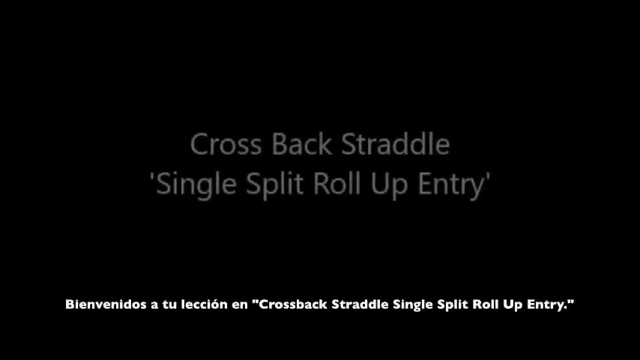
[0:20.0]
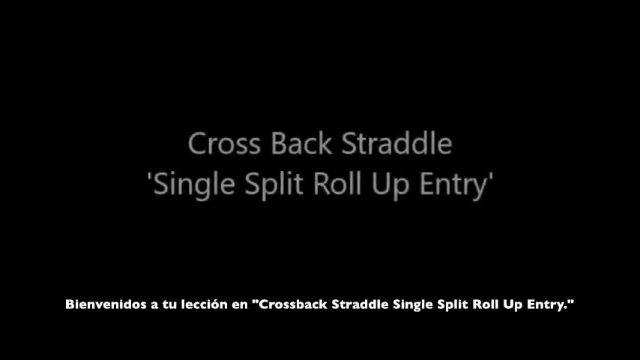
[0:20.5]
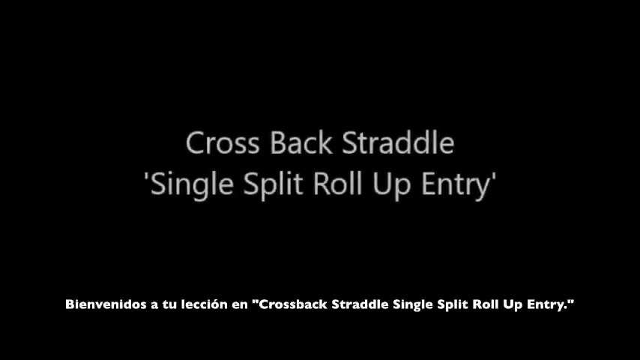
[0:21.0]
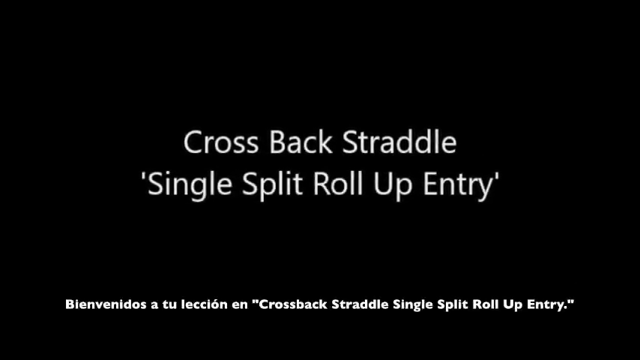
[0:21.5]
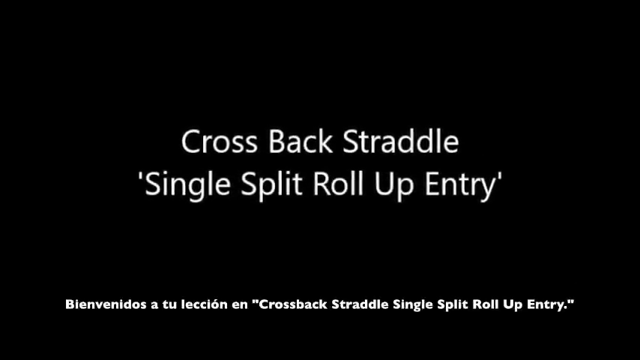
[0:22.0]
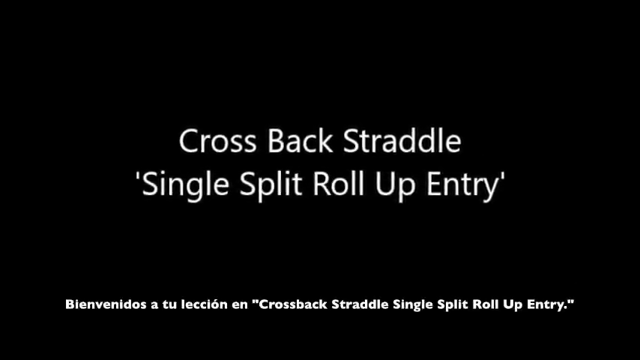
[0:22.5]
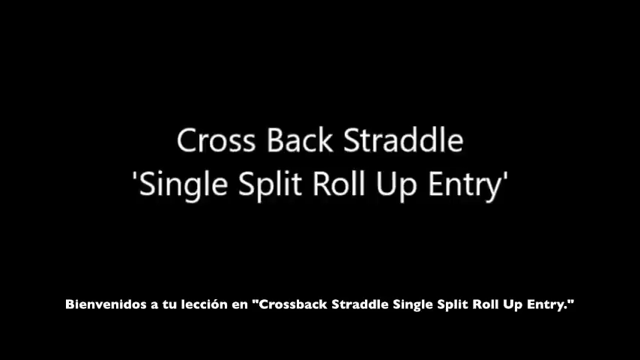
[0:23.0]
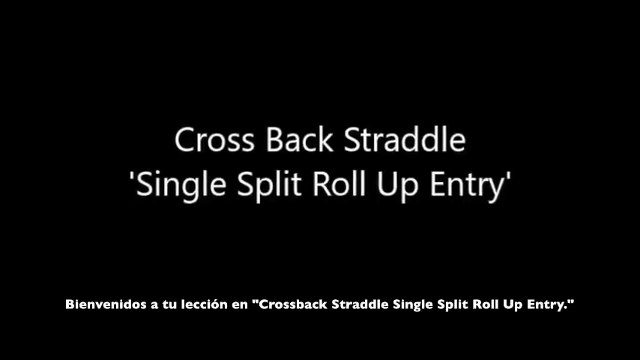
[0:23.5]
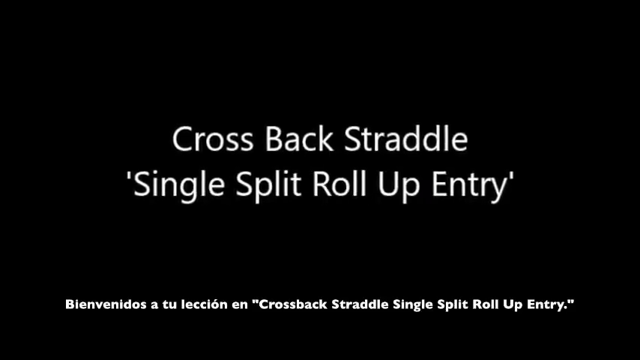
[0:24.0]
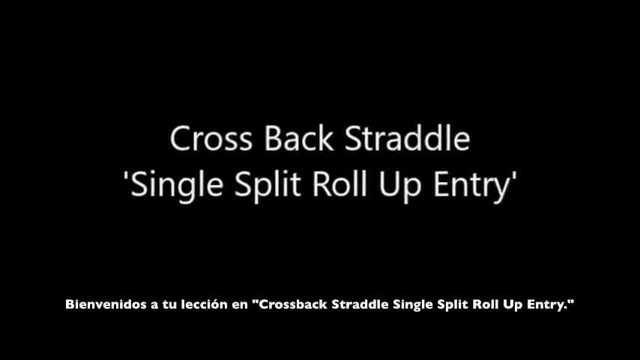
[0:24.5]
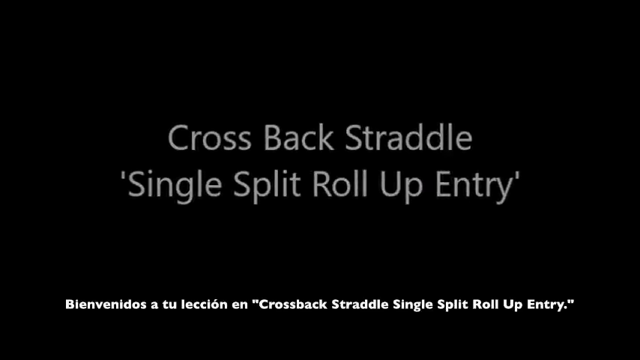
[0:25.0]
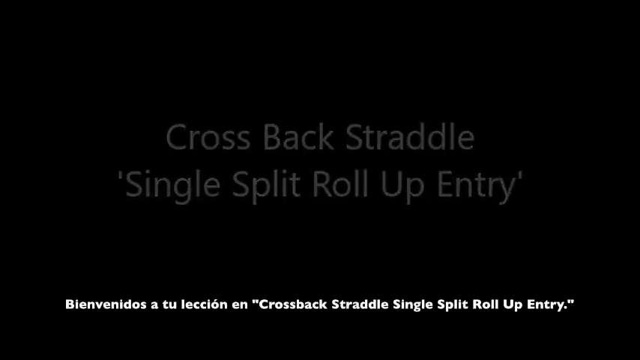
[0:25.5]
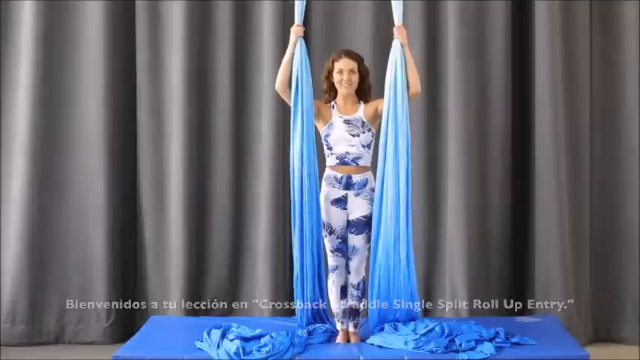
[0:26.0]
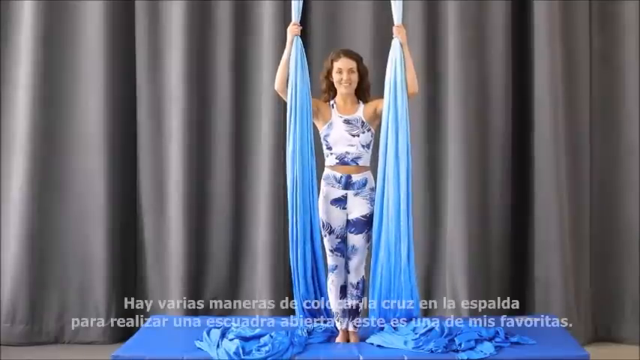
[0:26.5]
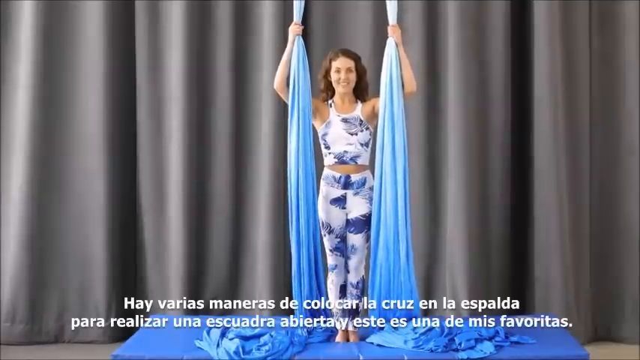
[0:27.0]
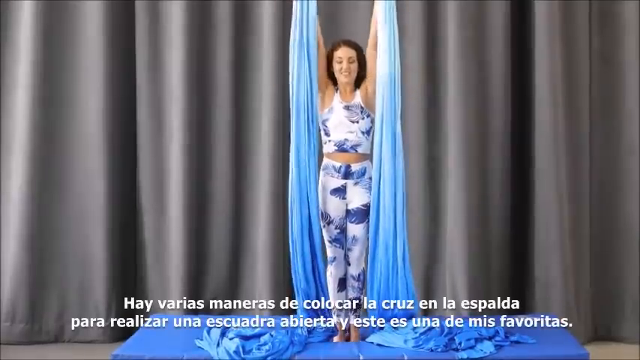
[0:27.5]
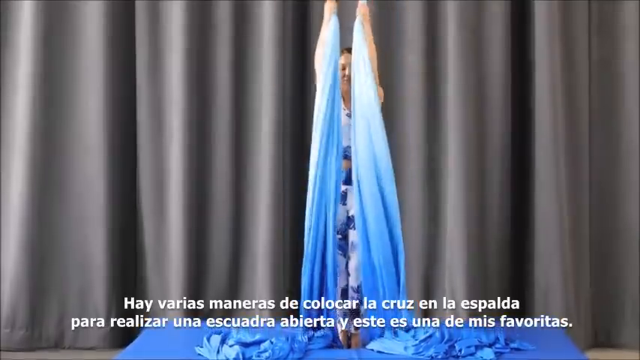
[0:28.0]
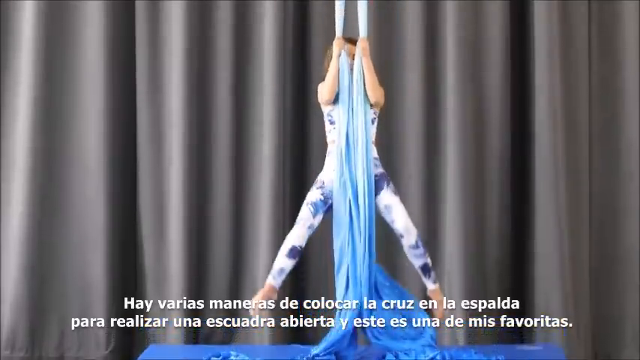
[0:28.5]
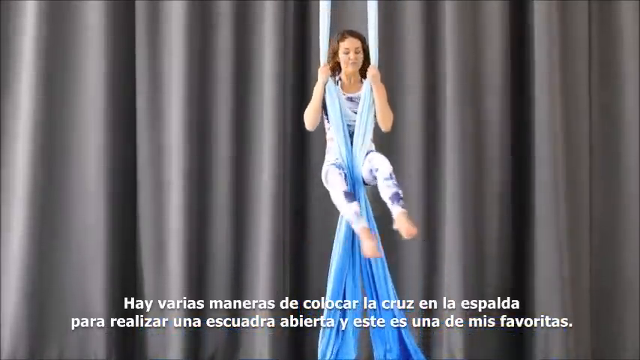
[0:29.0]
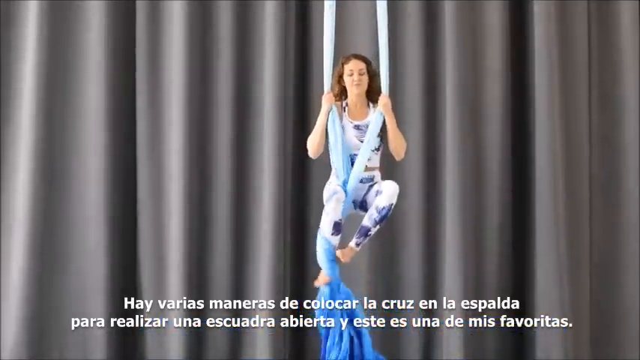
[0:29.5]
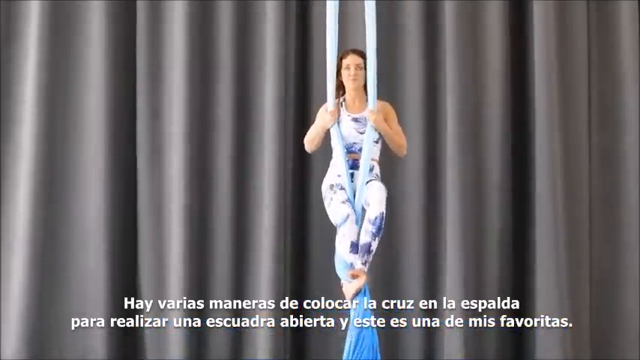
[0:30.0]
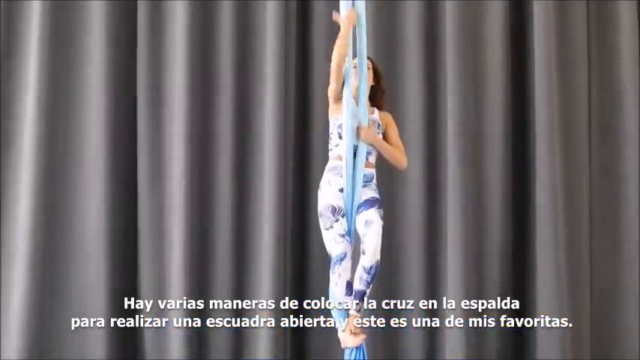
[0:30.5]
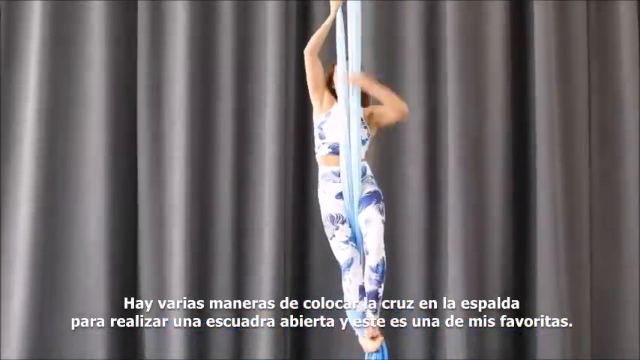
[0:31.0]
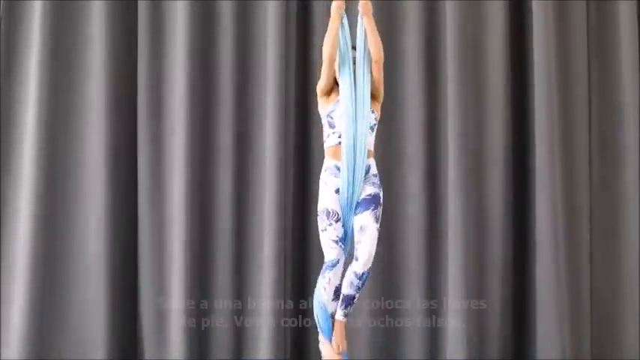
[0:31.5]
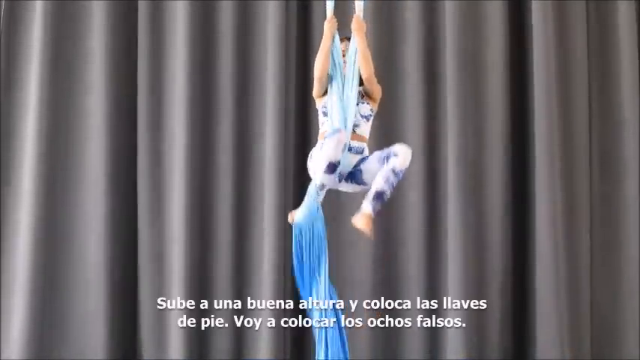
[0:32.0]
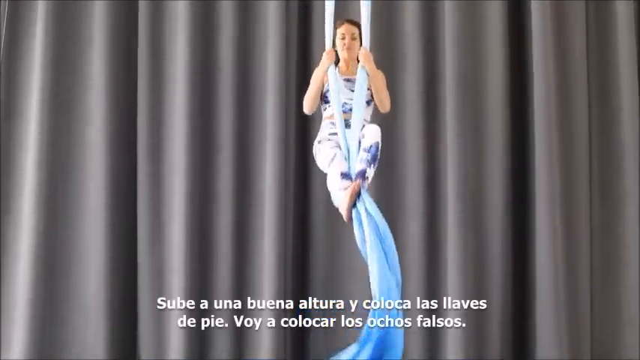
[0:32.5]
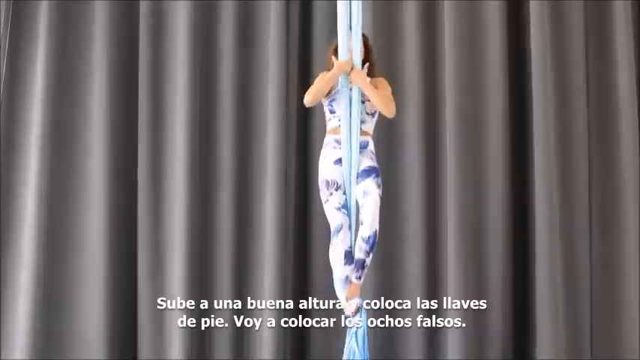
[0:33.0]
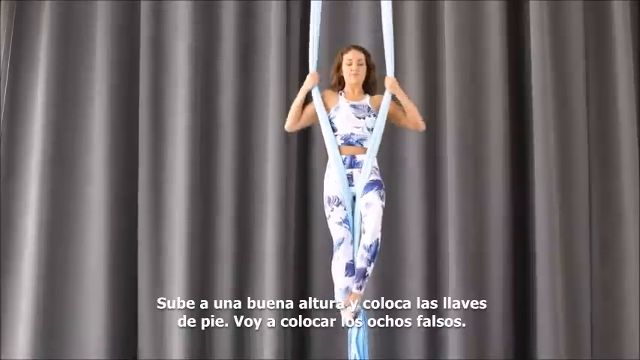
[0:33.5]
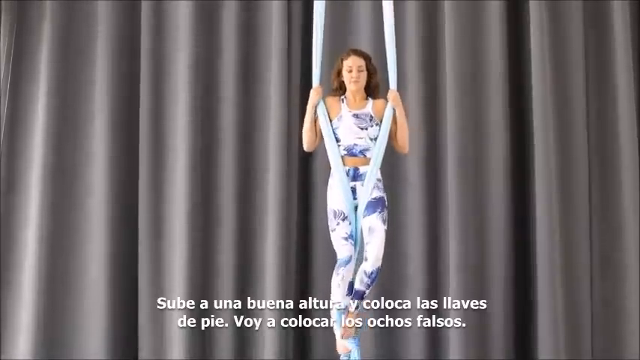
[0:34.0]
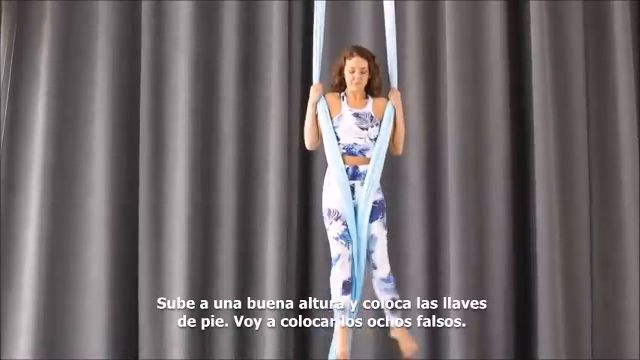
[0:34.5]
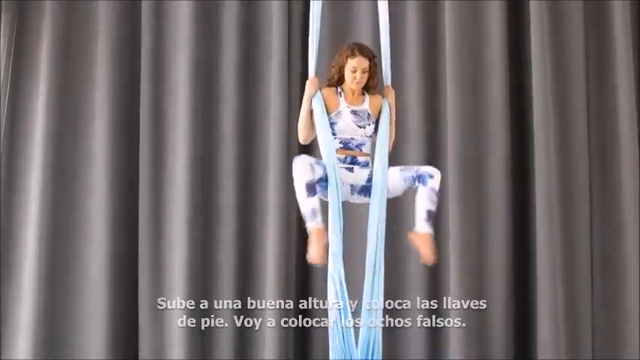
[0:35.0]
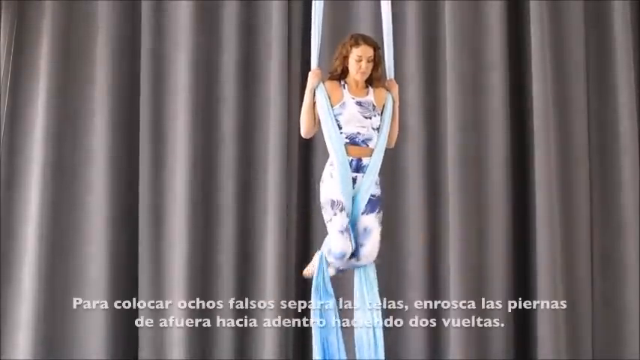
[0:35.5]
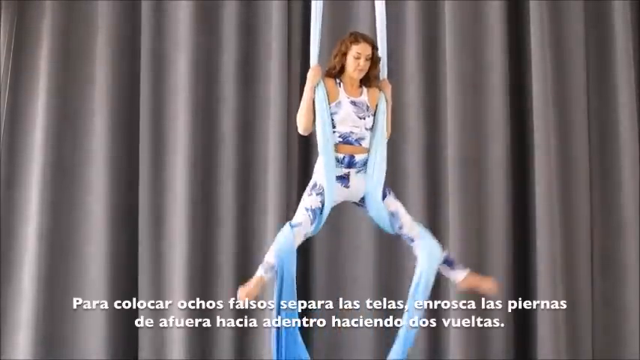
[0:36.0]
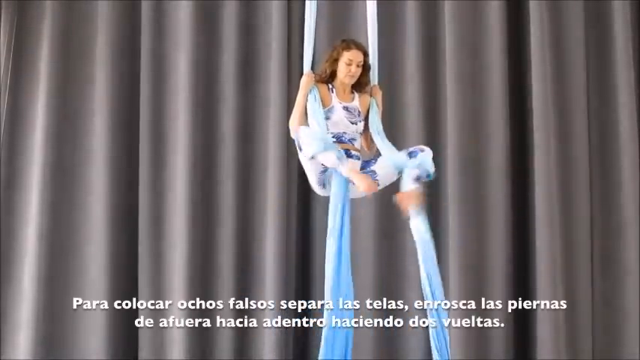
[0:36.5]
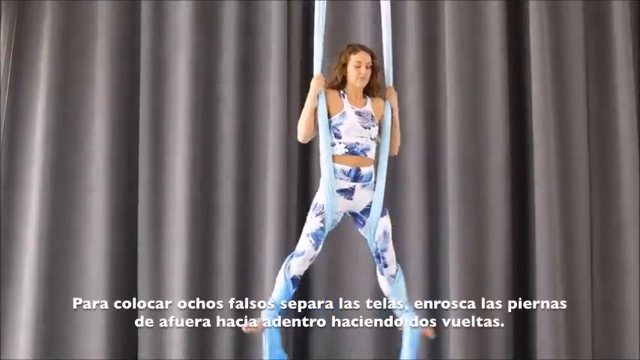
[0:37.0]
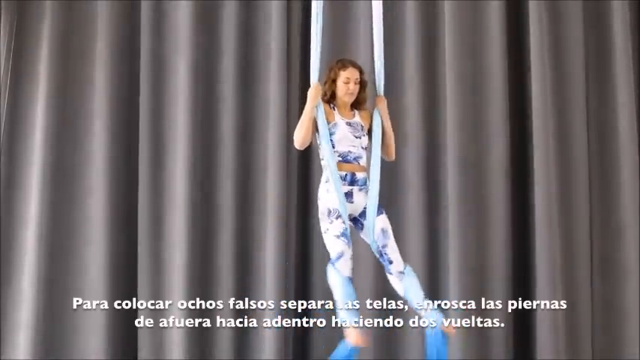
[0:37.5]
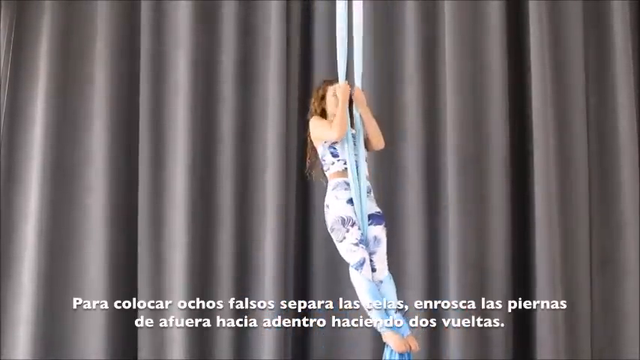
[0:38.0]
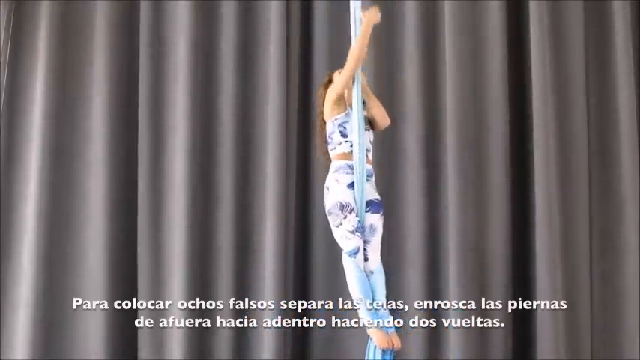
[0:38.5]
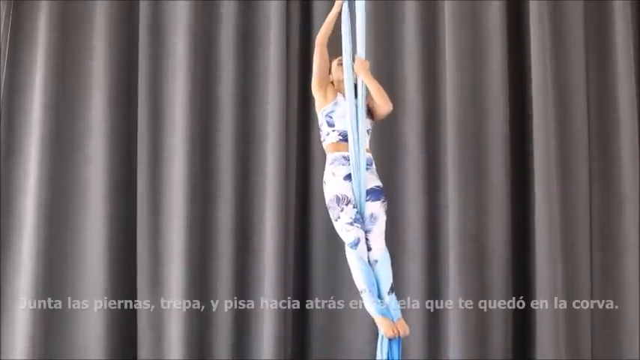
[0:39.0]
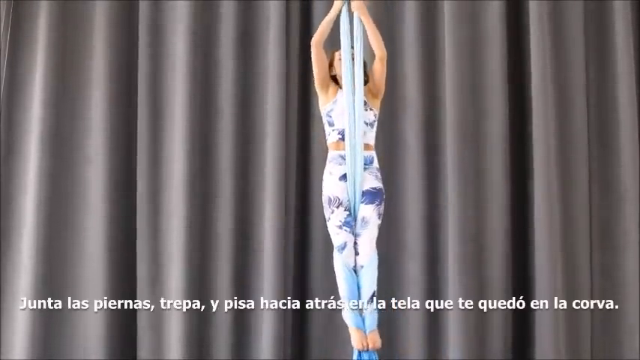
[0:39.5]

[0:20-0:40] White print on a black background reads "cross back straddle single split roll up entry," and the words come closer and closer as the view zooms in. A woman then wraps her legs around two greenish or teal fabrics hanging down and tries to climb up a little. A gray curtain is behind her. She wears soft white yoga pants and a sports bra, with her belly showing a little, and her outfit has some grayish purple colorings; the curtains in the background are a more gray color than her outfit. She has long, kind of auburn brown hair that is longer than shoulder length. She is doing an aerial performance.